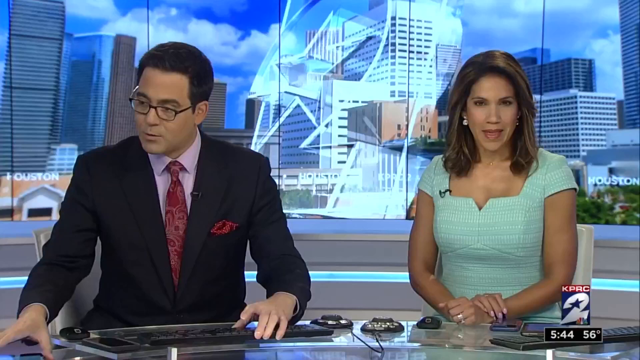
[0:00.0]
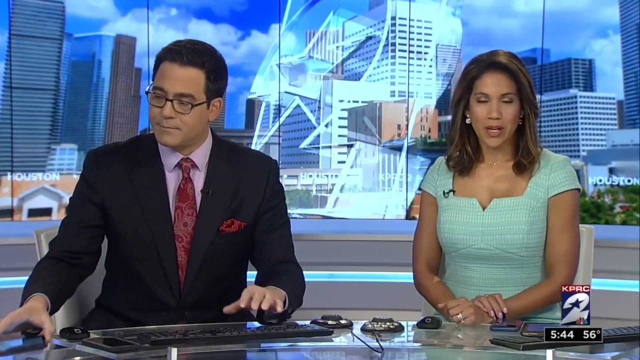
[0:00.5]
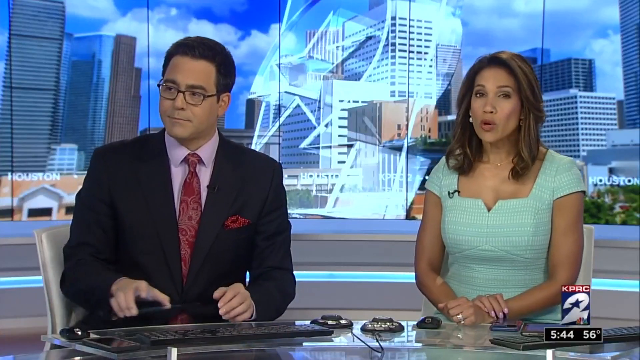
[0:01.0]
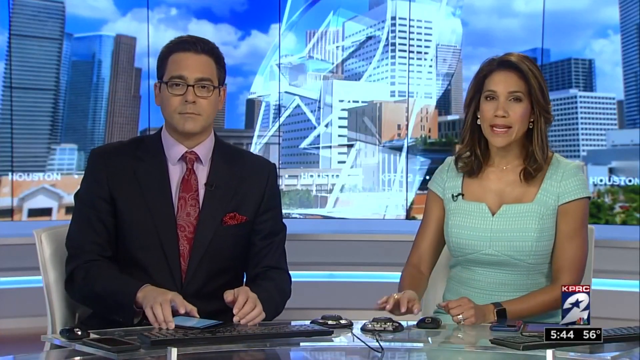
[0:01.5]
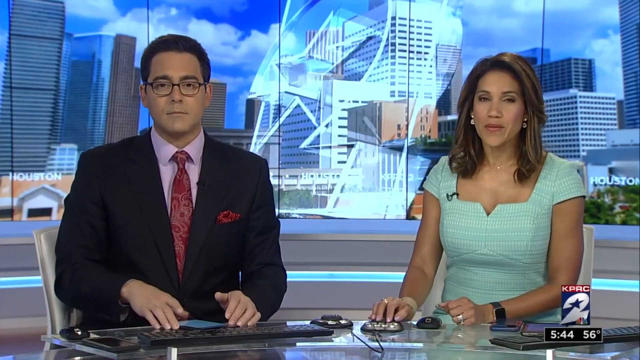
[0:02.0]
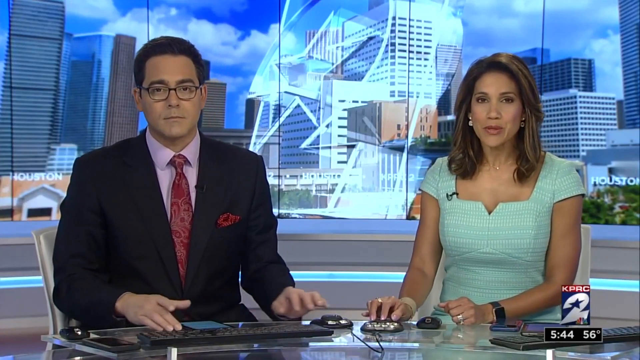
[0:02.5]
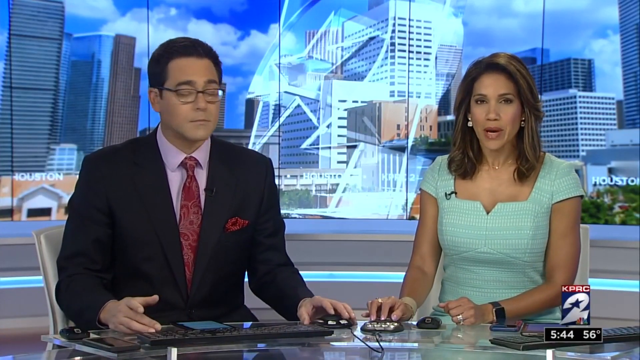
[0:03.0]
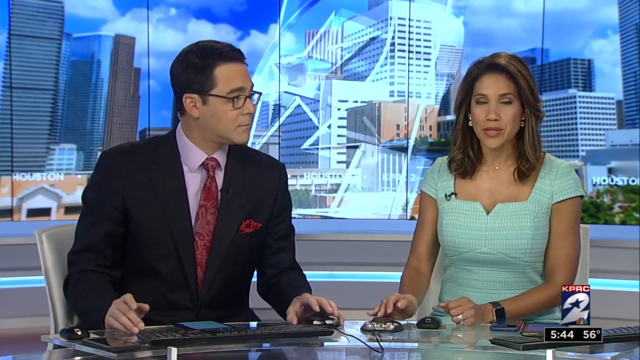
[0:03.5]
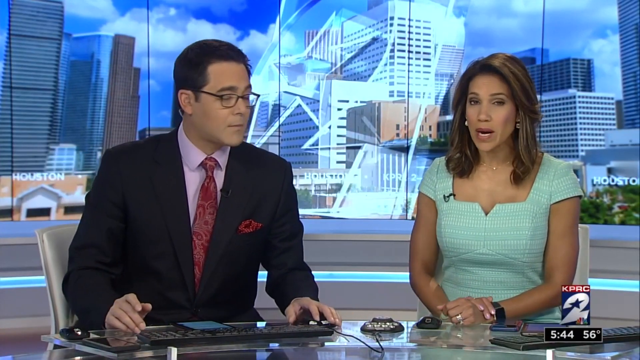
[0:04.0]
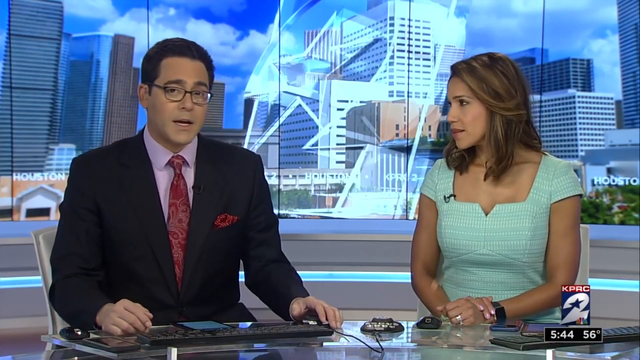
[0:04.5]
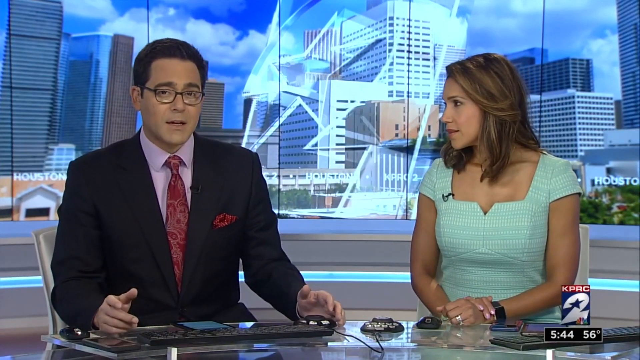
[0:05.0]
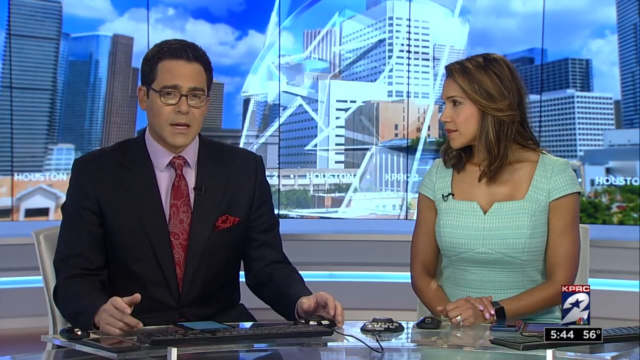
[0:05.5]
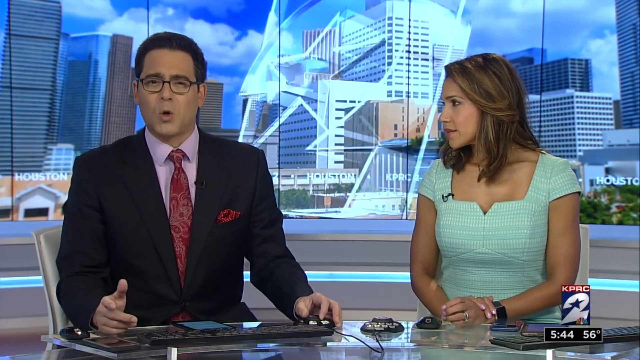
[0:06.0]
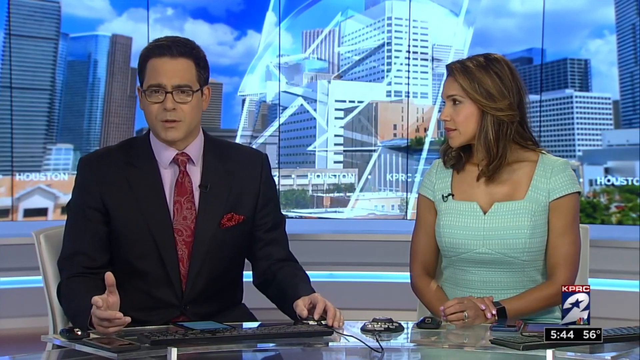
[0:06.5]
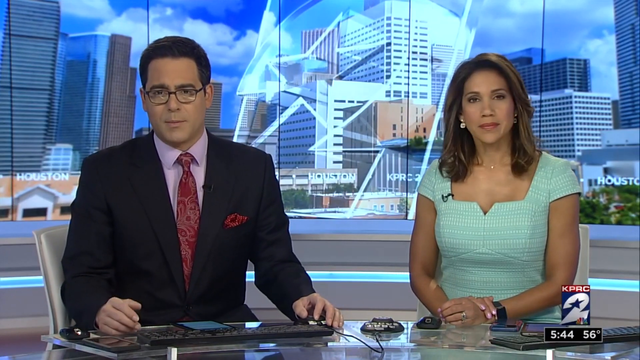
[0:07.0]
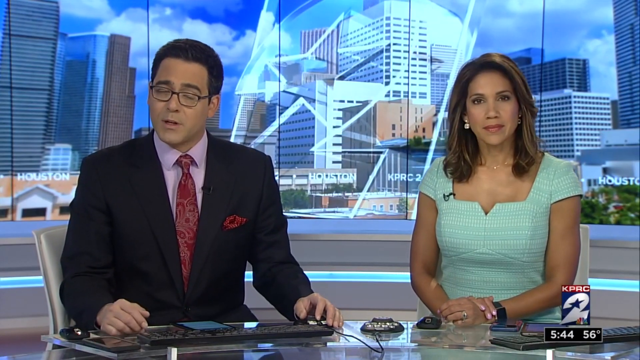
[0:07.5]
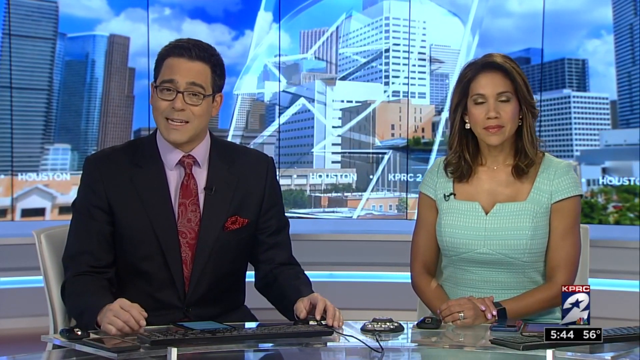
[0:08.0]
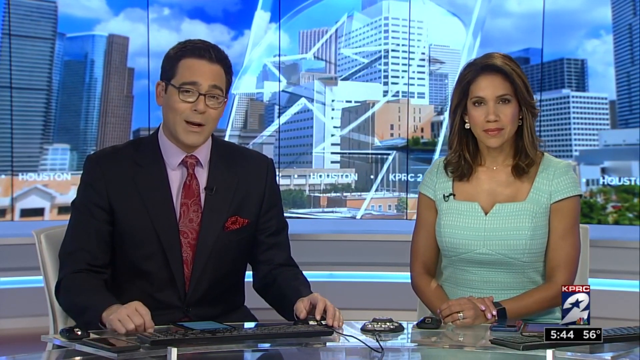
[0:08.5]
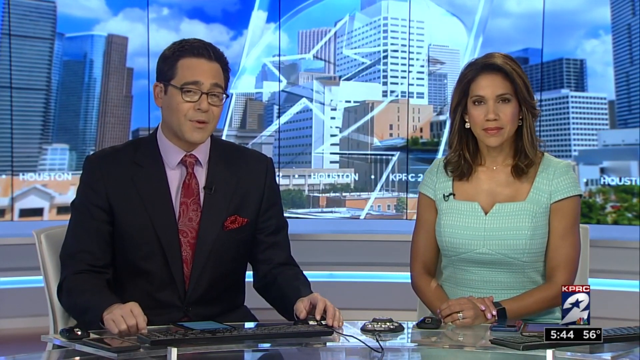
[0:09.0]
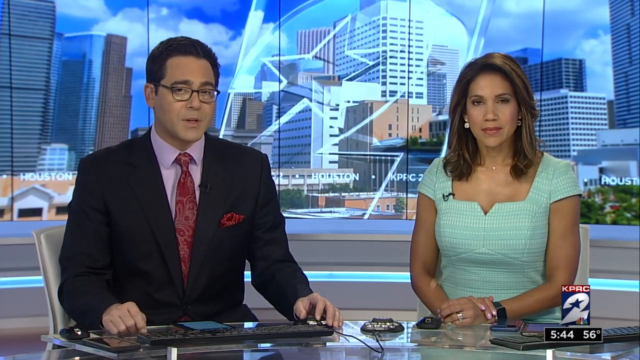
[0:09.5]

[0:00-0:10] A news broadcast from KPRC Channel 2 News in Houston, Texas opens with two broadcasters sitting at a table, each with a keyboard in front of them. The male broadcaster wears glasses and has dark hair, a black jacket, a pink shirt and a red tie with a white design. He has a red handkerchief in his suit pocket and a microphone on his left lapel. The woman wears a light blue dress with a microphone on its right side. She has dark, medium-length hair and wears earrings, and her hands are crossed in front of her. The background is a video of skyscrapers in downtown Houston, Texas. The two talk to each other: the man starts talking, the woman says something, and then the man looks to the left and the right.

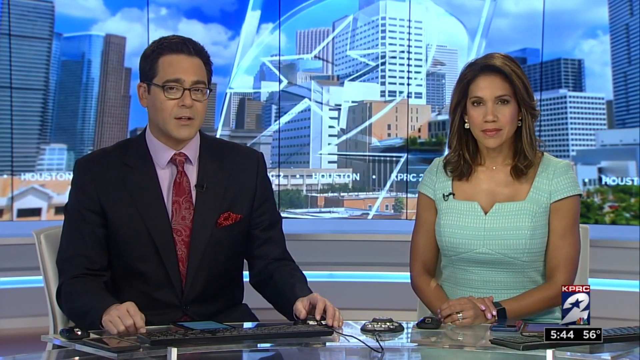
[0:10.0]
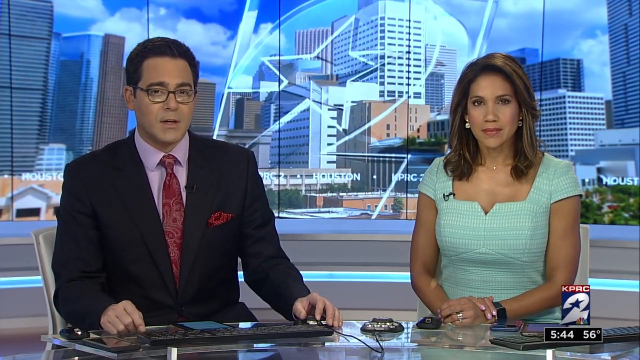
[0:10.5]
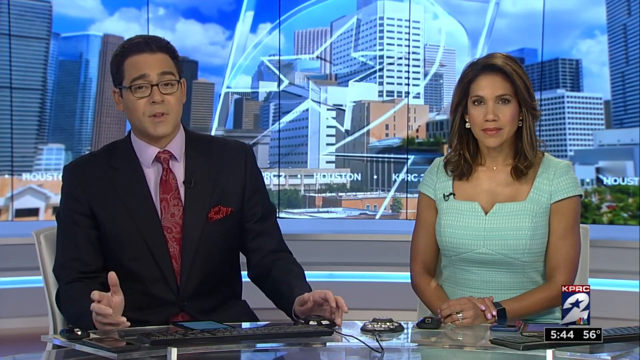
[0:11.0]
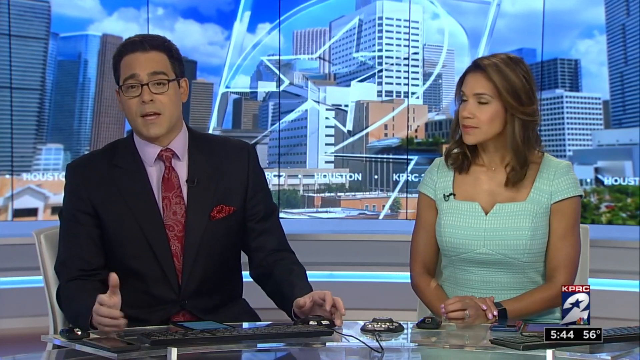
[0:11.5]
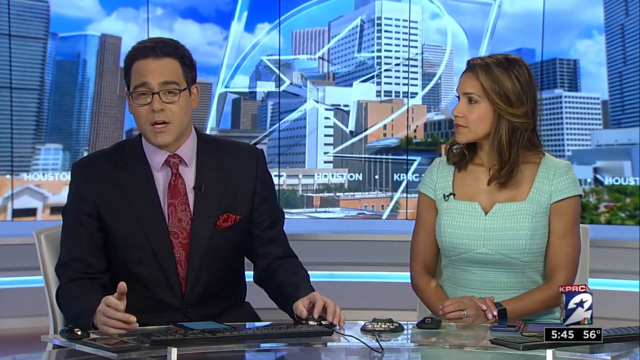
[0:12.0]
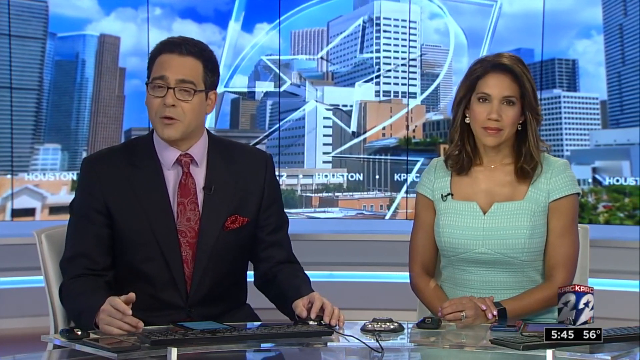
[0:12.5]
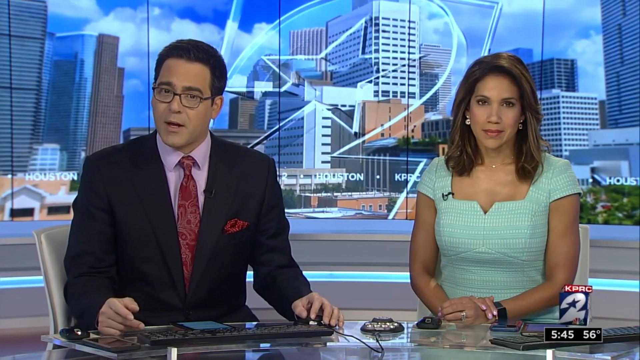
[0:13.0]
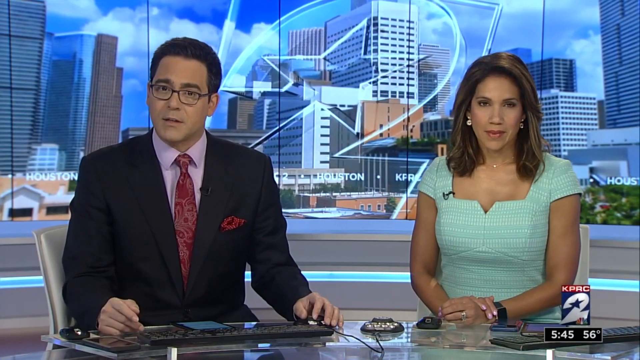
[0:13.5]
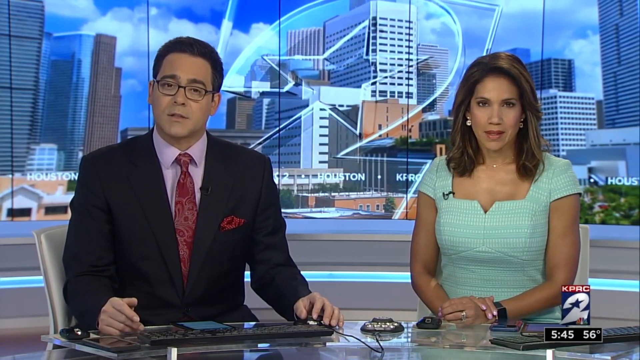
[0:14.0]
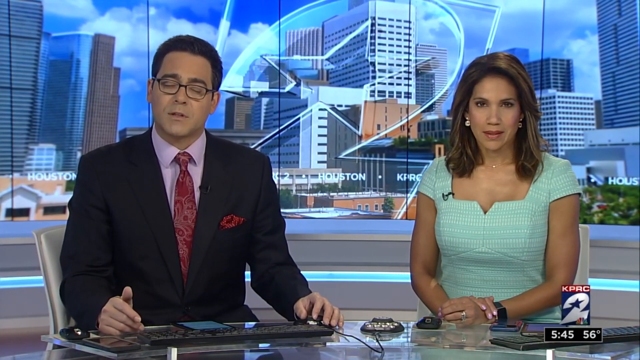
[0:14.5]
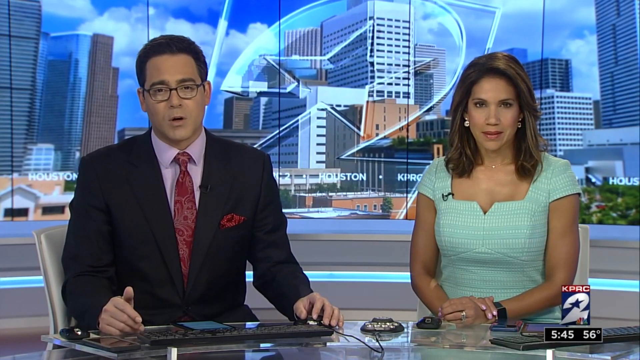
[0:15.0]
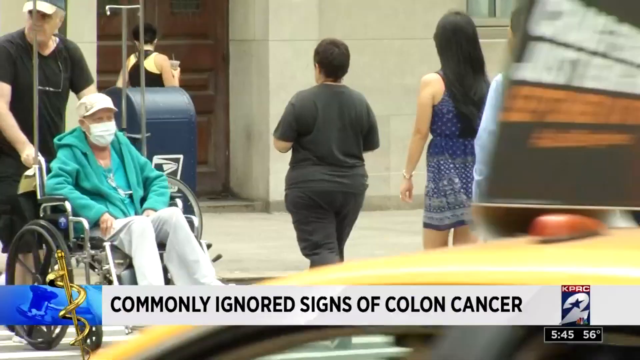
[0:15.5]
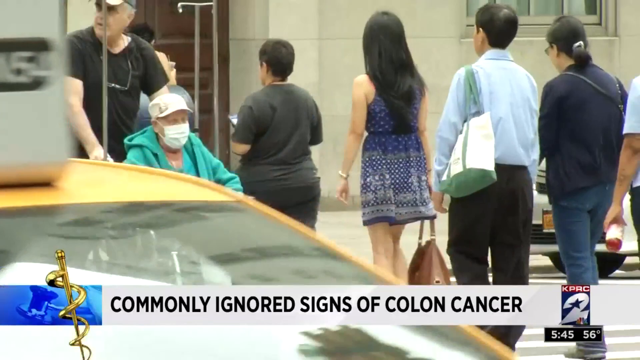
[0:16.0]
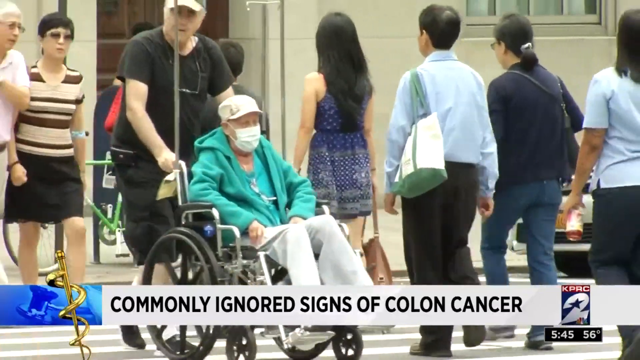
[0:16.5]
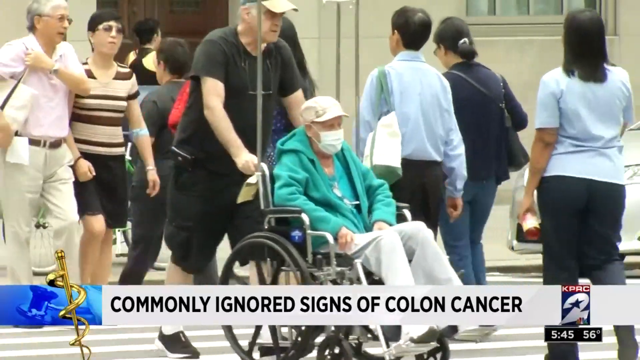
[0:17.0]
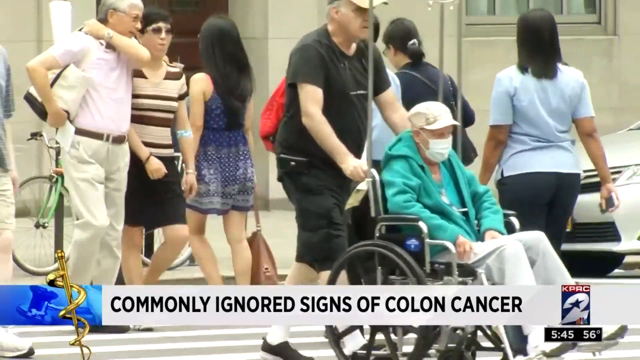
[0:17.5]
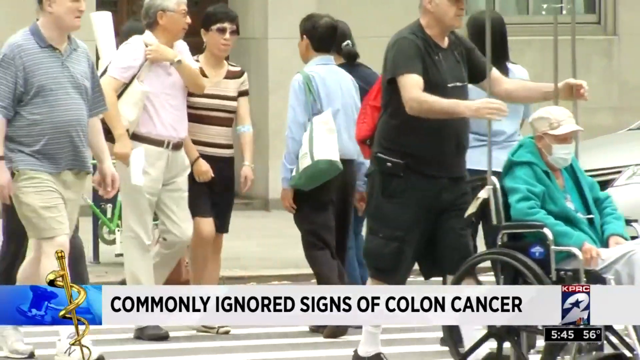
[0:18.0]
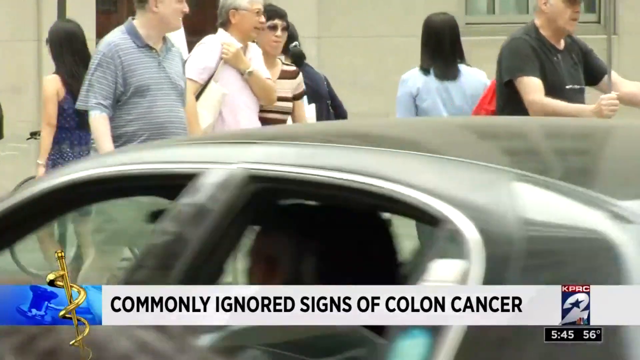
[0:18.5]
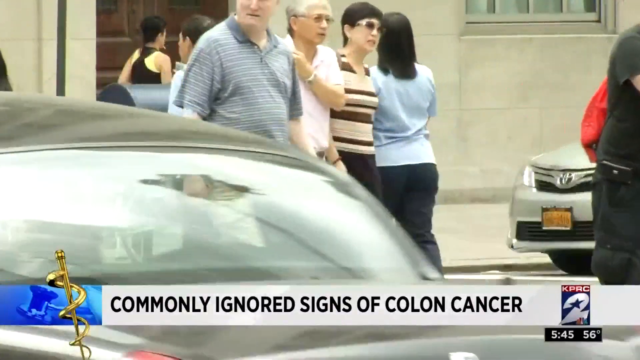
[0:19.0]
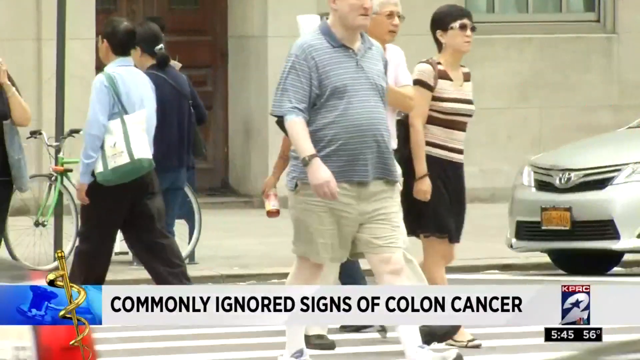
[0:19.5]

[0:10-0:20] The KPRC Channel 2 news broadcast from Houston, Texas shows a male and a female broadcaster. The man wears a black jacket, a pink dress shirt and a red tie with a white design on it, with a red handkerchief in his jacket pocket. The woman wears an aqua dress with a microphone on its right side, a gold necklace, earrings and a watch on her left wrist. Her hands are crossed in front of her, and in the background is a video of downtown Houston, Texas. The man is talking and the woman turns her head right to look at him. Then the segment on commonly ignored signs of colon cancer begins, showing men and women walking down the street. A man in a wheelchair wears a baseball cap, a mask over his face, an aqua jacket and white pants. He is pushed by someone in a baseball cap, a black t-shirt and black shorts.